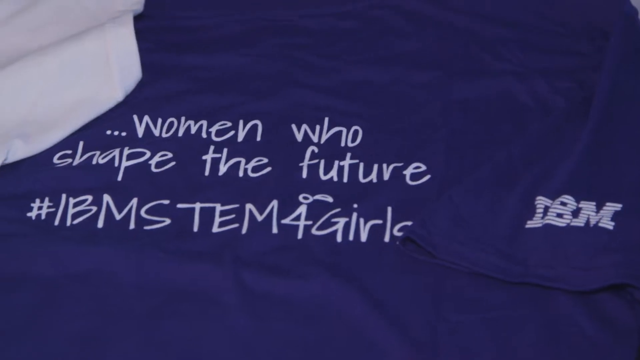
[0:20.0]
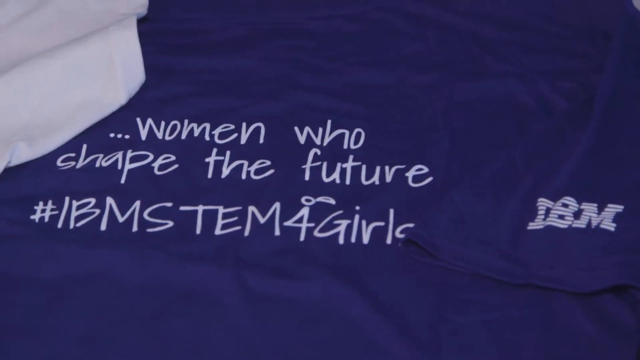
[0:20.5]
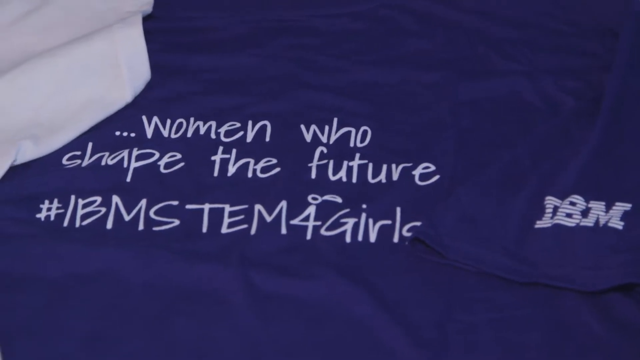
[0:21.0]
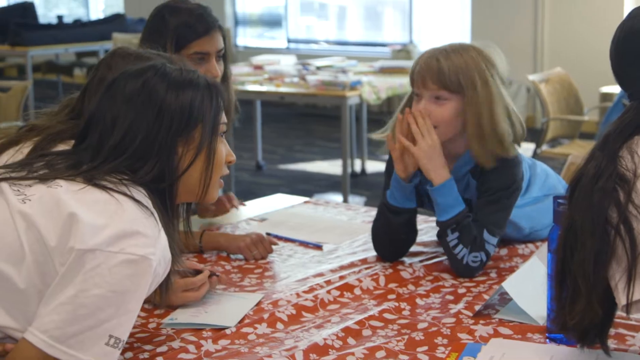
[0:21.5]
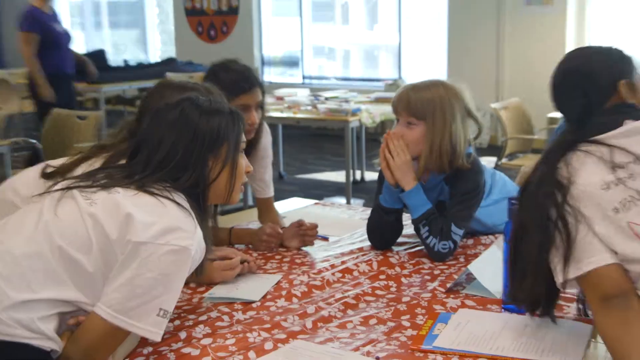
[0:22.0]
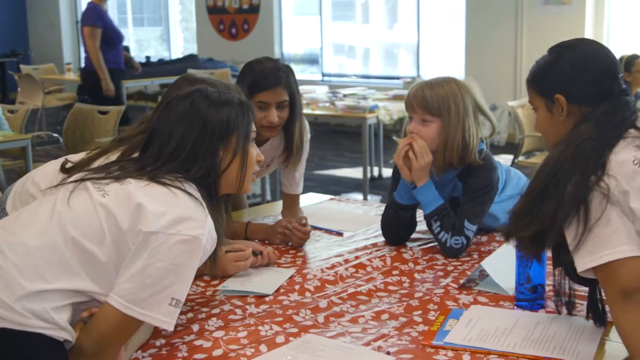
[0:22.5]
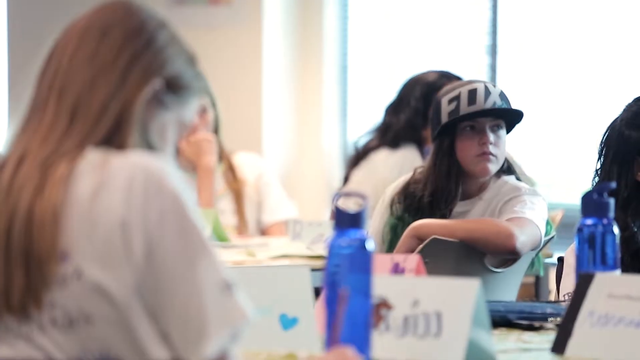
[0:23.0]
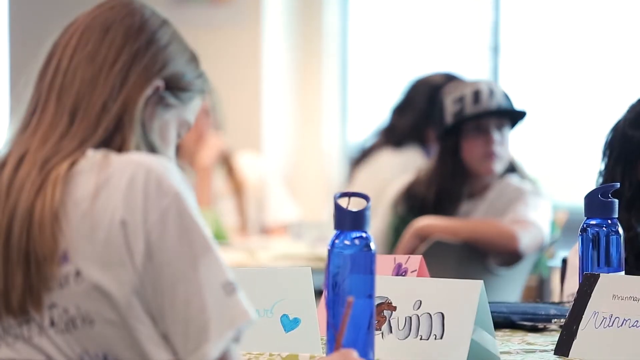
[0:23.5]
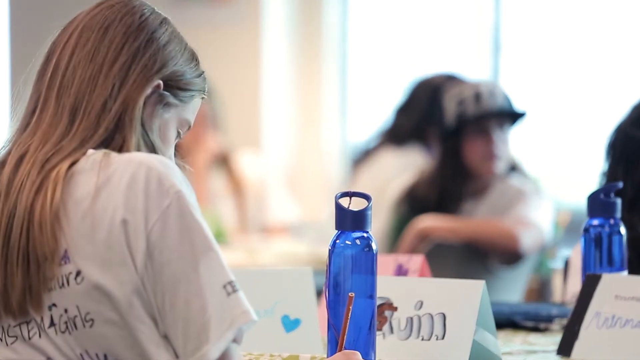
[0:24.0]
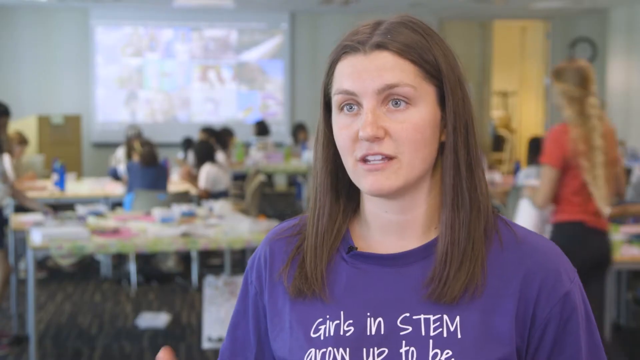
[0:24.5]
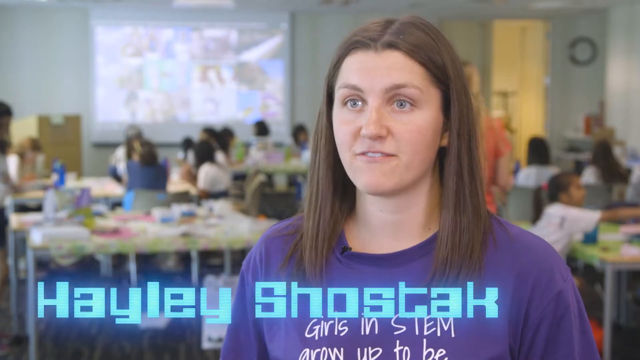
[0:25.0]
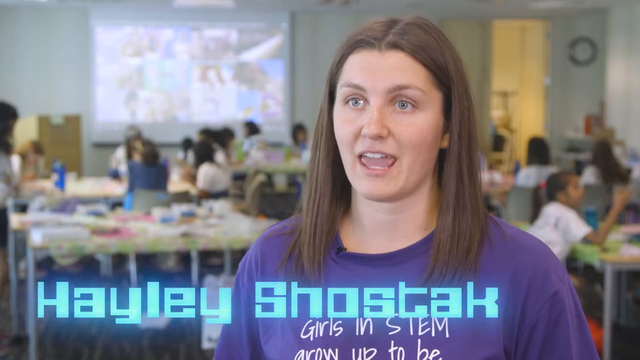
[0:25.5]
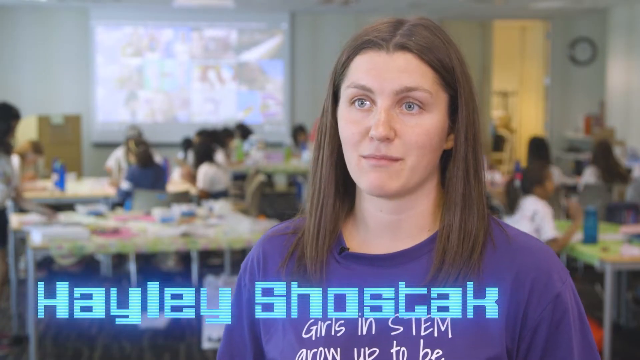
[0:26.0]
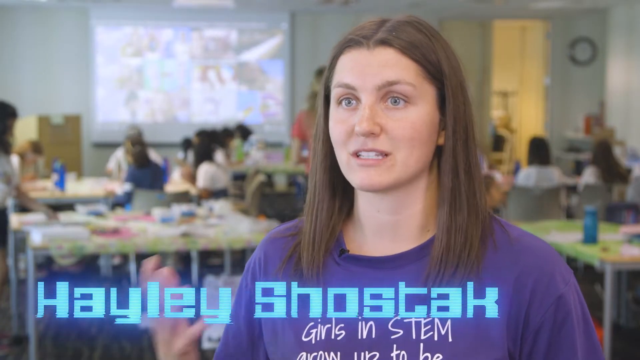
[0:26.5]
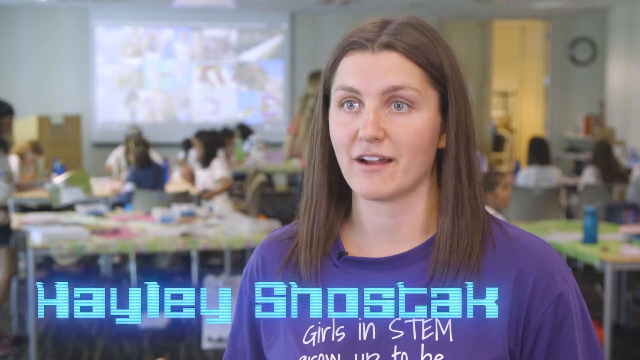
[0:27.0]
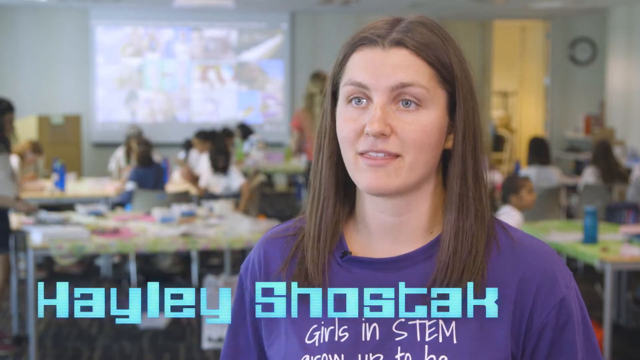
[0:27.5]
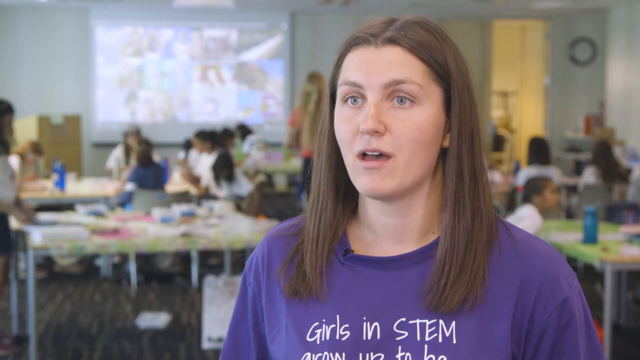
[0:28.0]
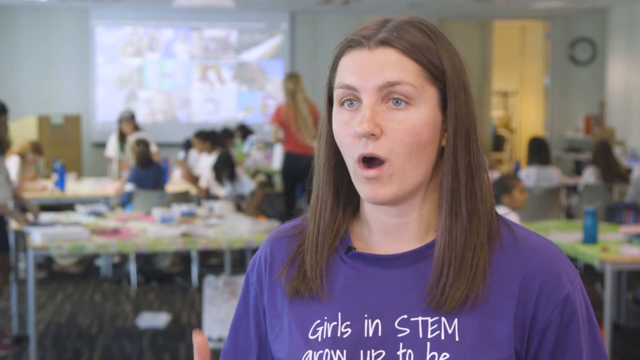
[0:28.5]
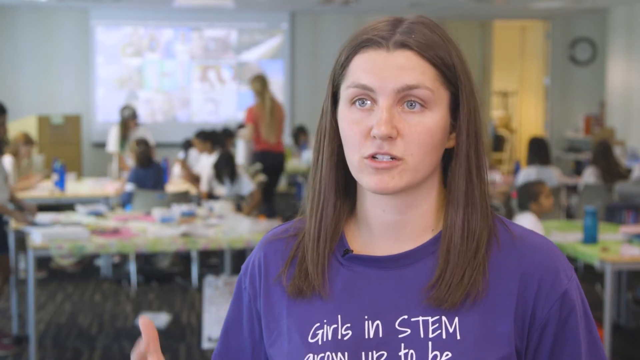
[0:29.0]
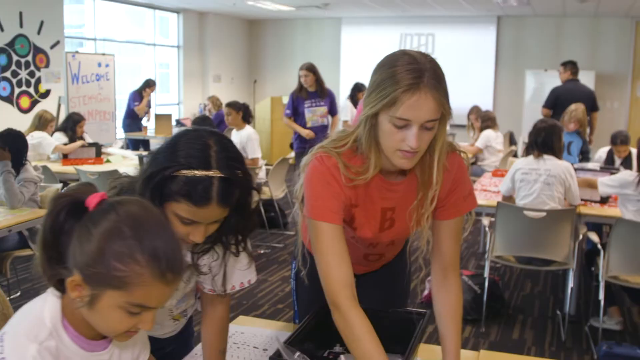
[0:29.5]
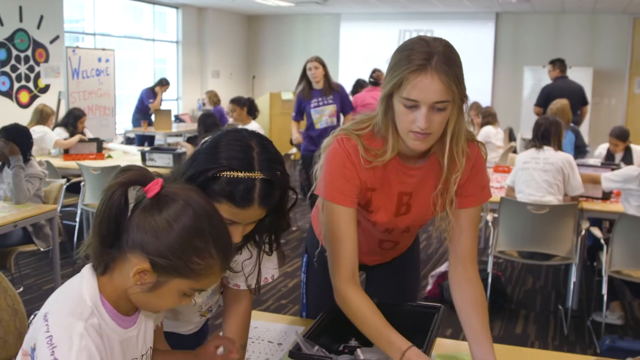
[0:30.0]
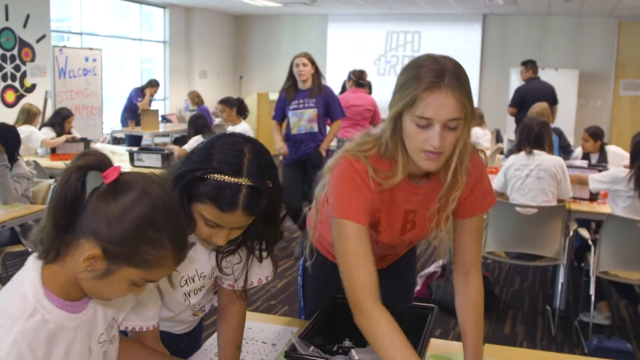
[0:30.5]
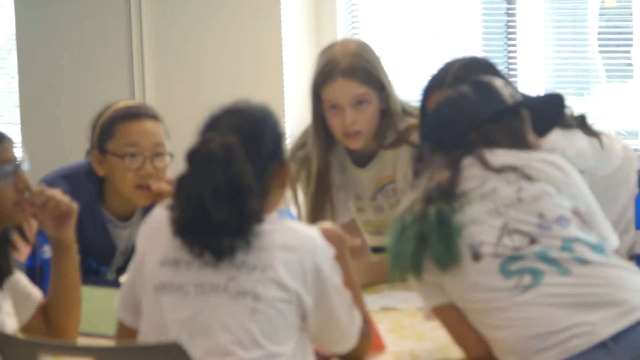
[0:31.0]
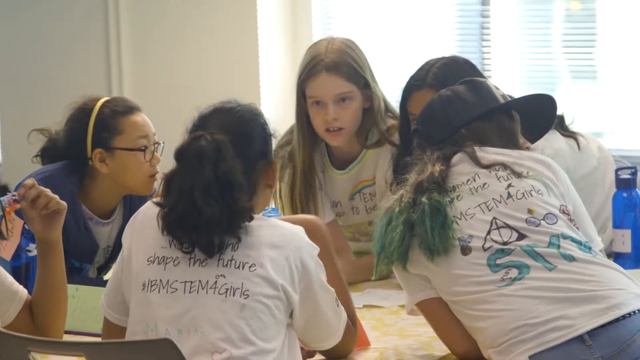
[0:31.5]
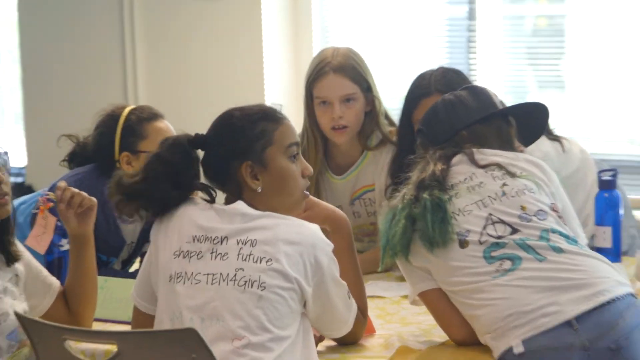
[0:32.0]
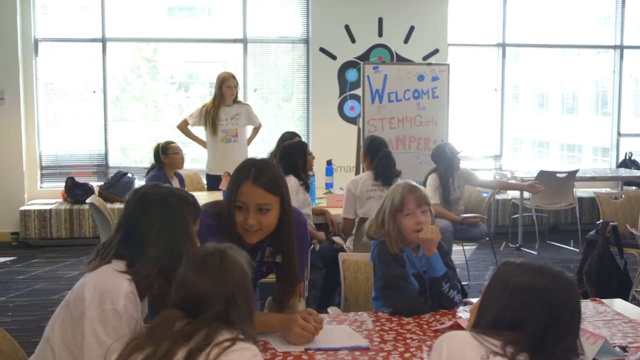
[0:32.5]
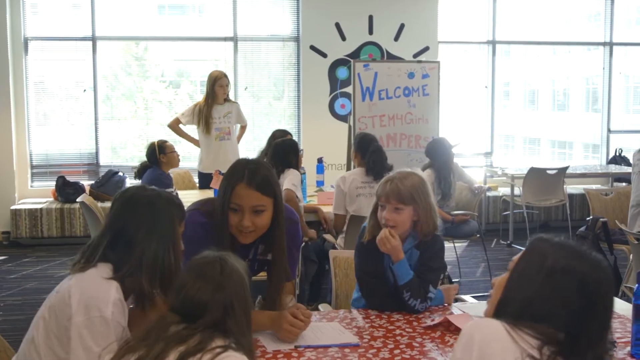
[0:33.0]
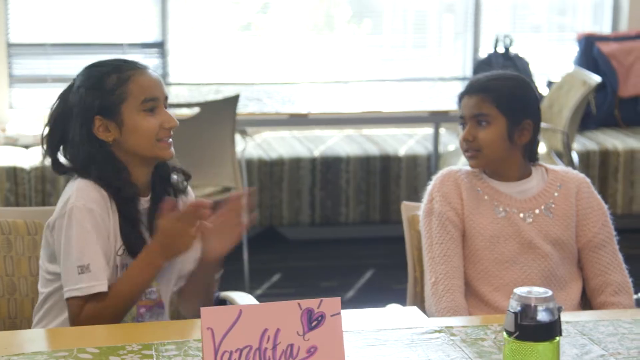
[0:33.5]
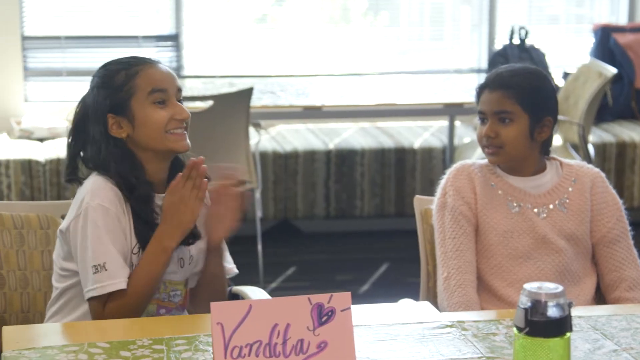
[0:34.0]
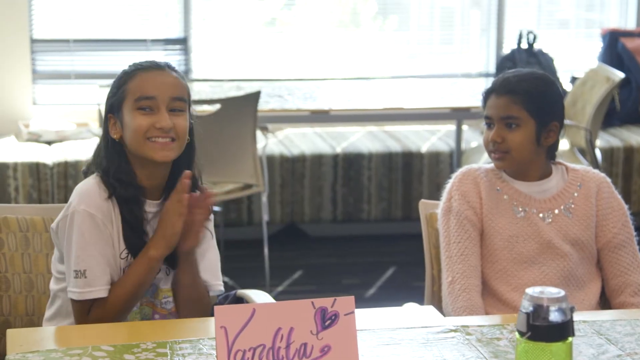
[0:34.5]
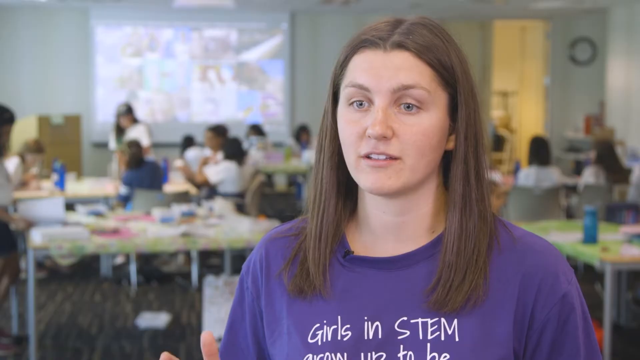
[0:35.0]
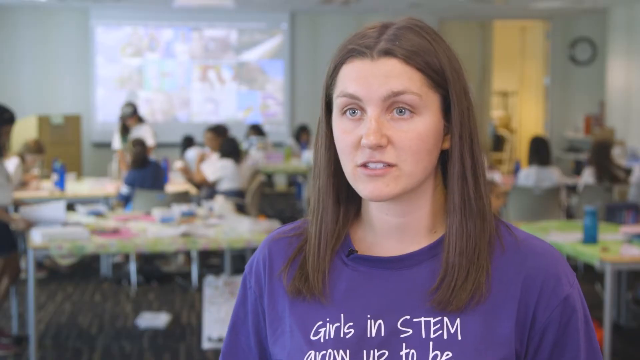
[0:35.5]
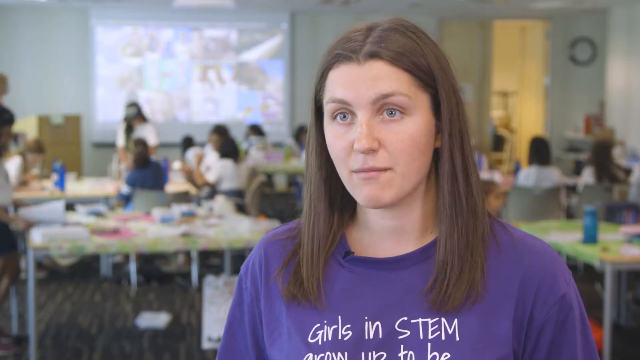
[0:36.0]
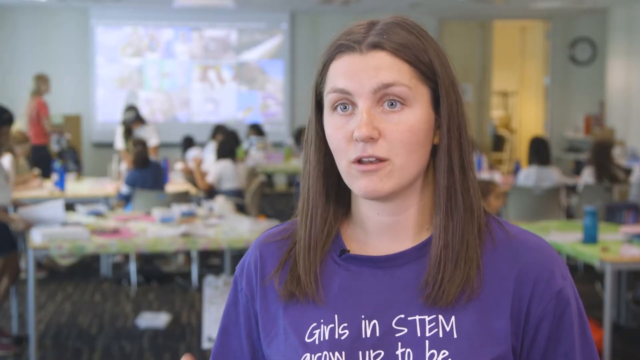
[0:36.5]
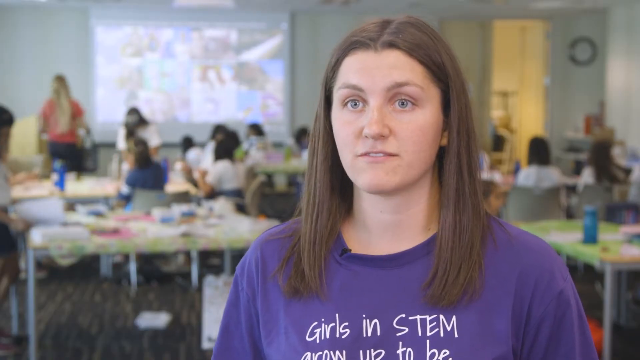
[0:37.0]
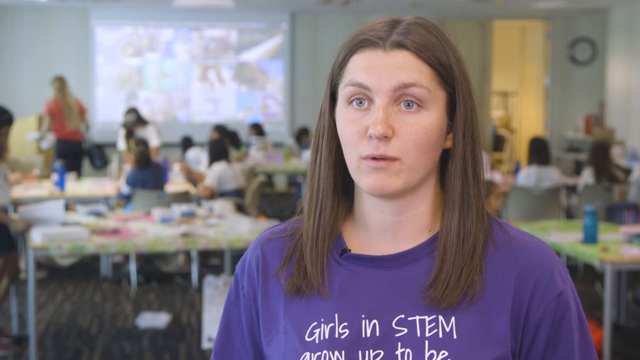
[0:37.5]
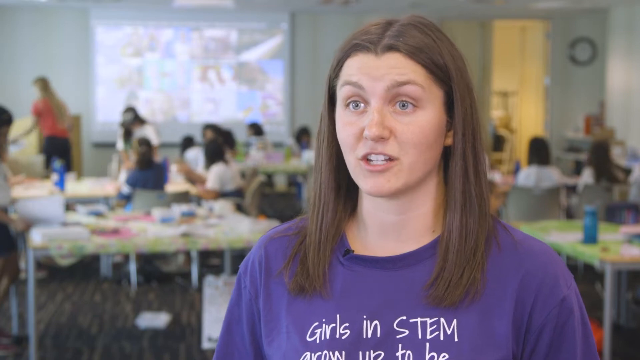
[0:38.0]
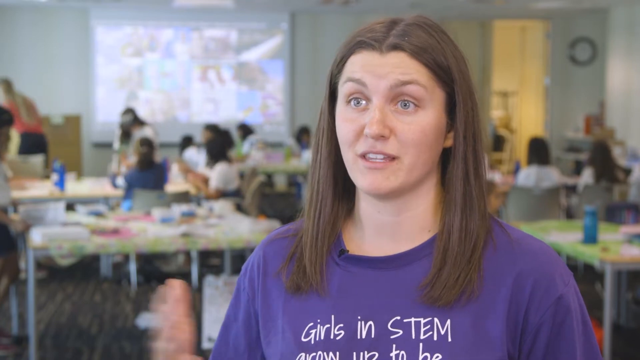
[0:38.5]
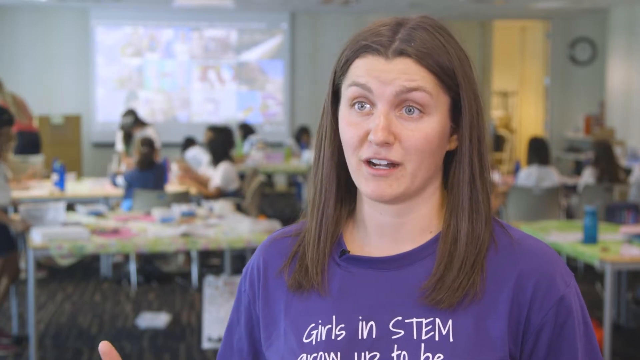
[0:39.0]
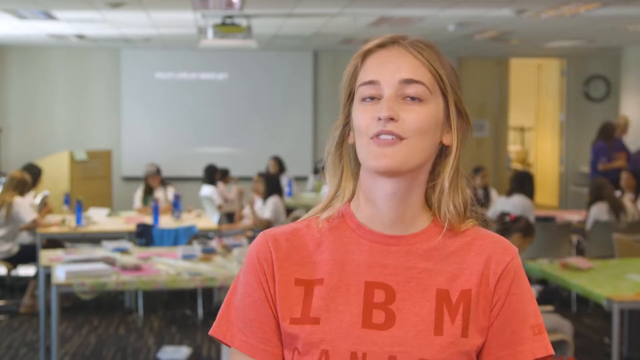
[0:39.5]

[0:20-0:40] The video begins on a dark bluish-purple shirt with the IBM logo in white. White text says "women who shape the future #IBM STEM for girls." Elementary-age girls are in a classroom or lab at an elementary school, with many kids around round and rectangle tables holding lab supplies or arts and crafts supplies. At least two adult volunteers are there to help. The girl who is speaking wears a purple "girls in STEM" t-shirt; she is white, with long dishwater blonde hair and blue eyes. She is Haley Shostak, and she gestures with her right hand as she speaks. The camera goes around the room showing the students and the items on the tables.